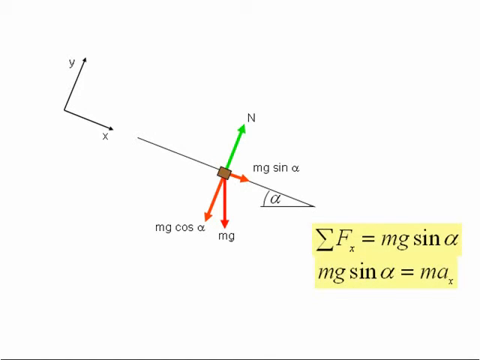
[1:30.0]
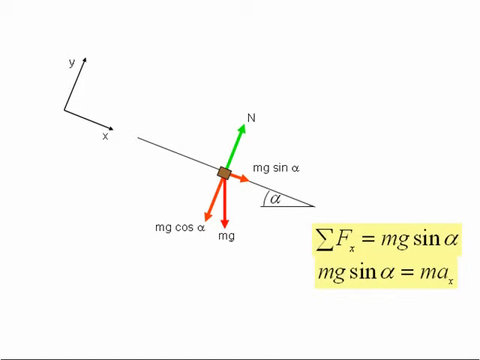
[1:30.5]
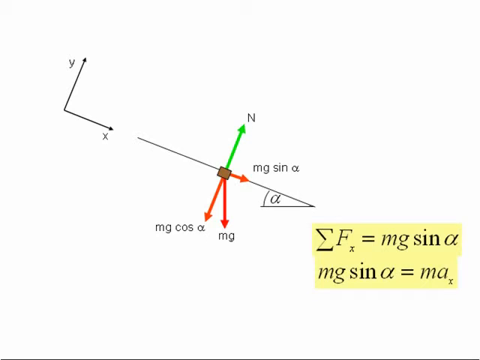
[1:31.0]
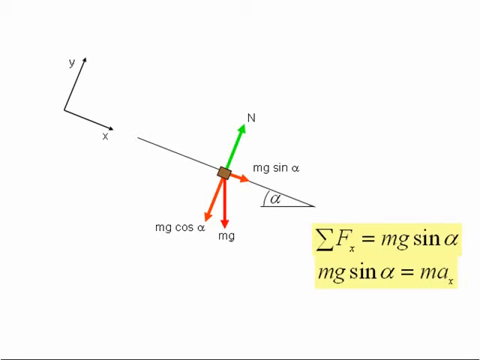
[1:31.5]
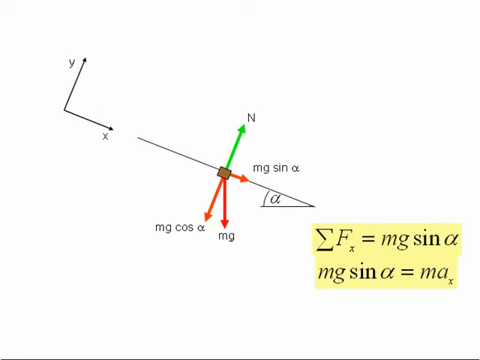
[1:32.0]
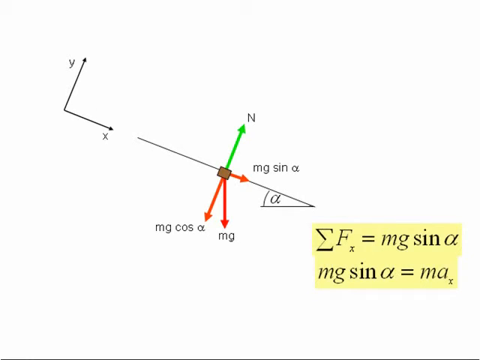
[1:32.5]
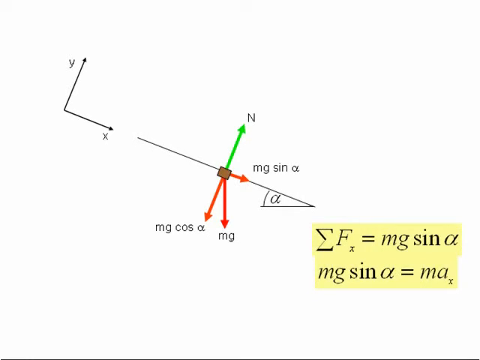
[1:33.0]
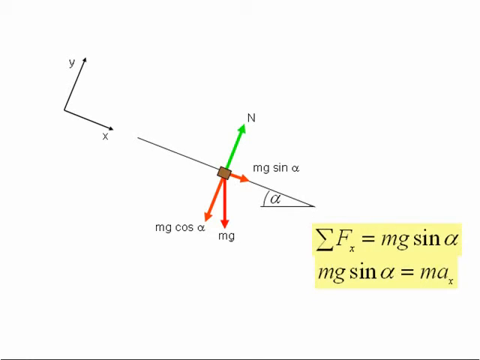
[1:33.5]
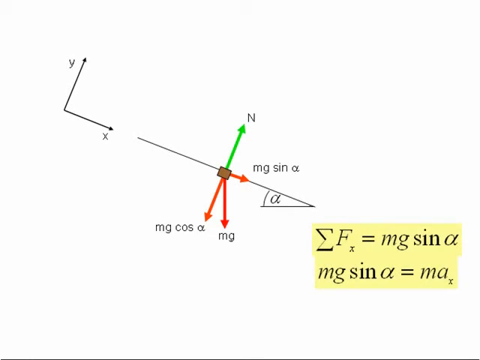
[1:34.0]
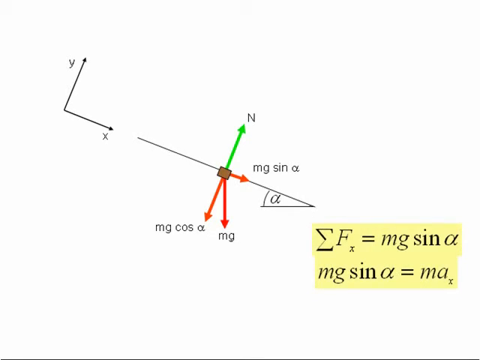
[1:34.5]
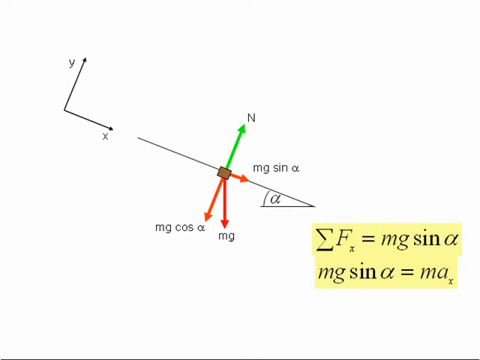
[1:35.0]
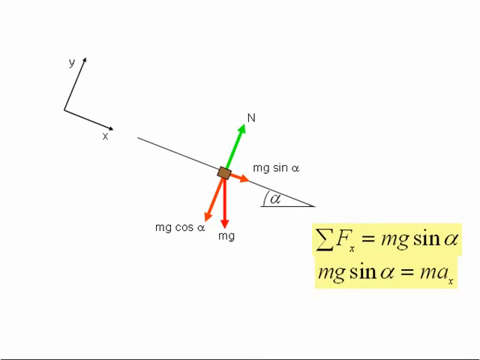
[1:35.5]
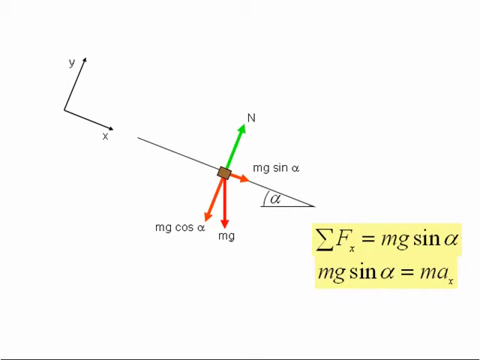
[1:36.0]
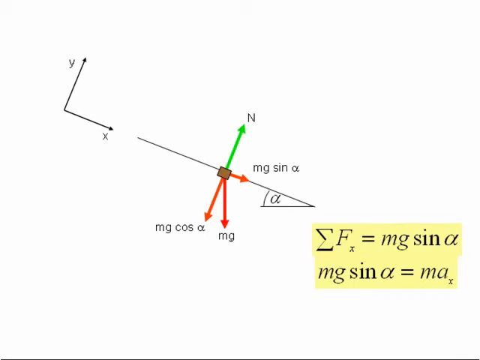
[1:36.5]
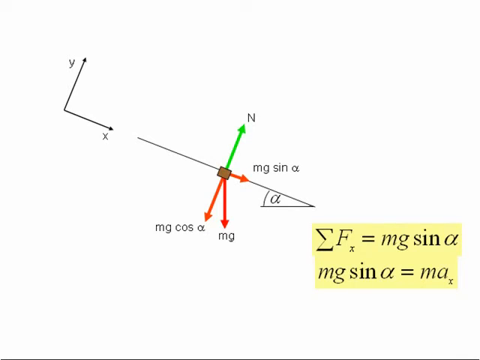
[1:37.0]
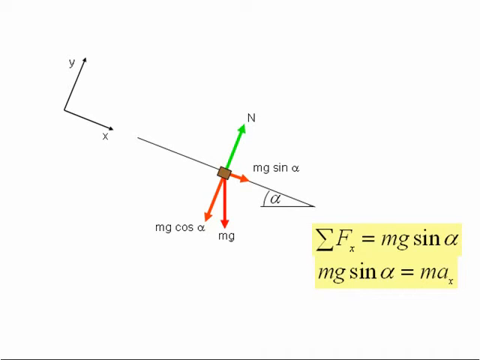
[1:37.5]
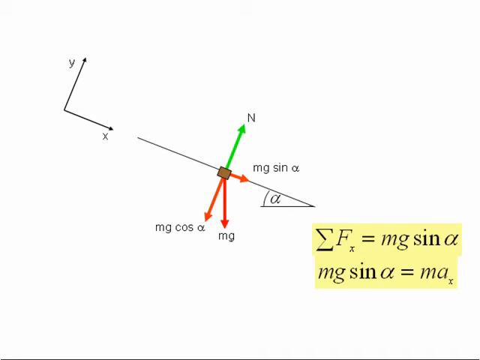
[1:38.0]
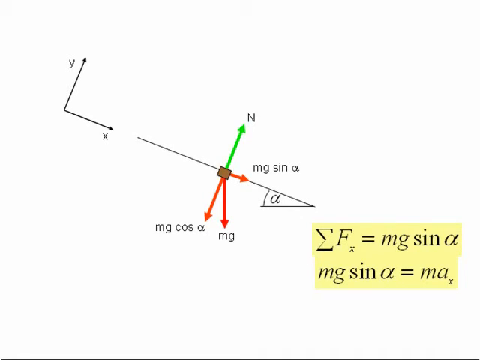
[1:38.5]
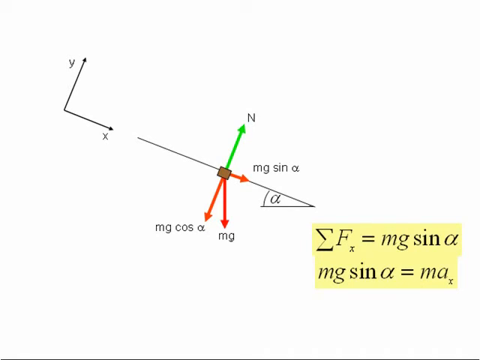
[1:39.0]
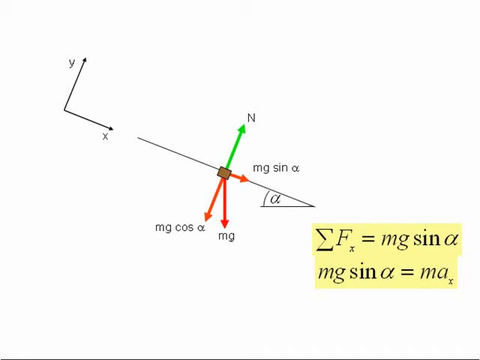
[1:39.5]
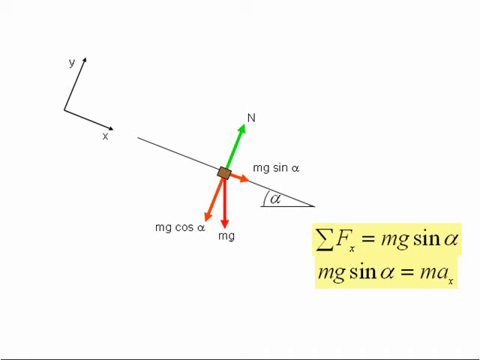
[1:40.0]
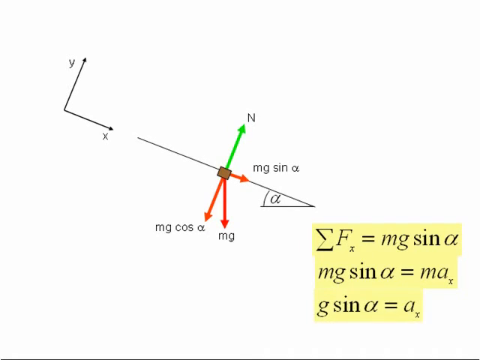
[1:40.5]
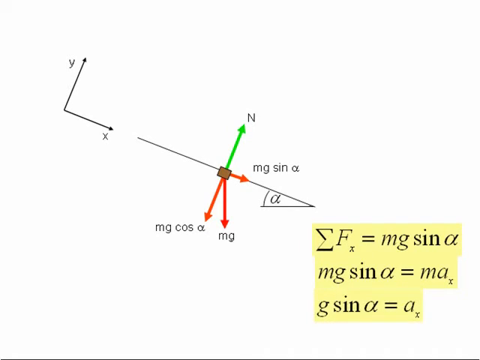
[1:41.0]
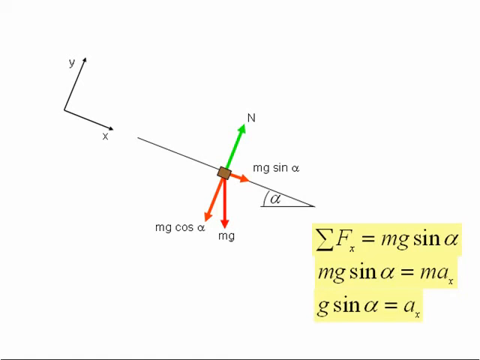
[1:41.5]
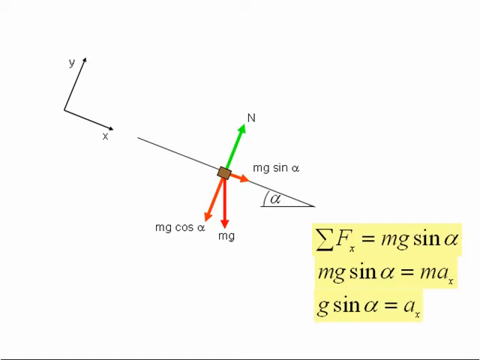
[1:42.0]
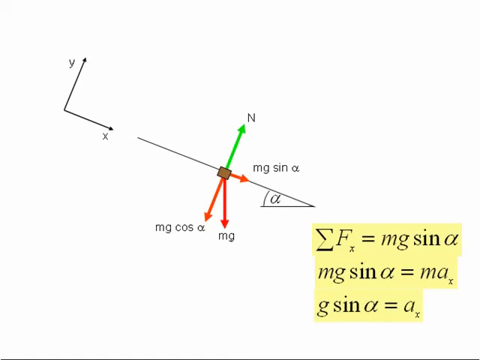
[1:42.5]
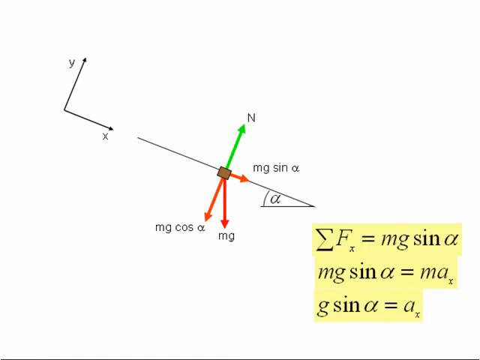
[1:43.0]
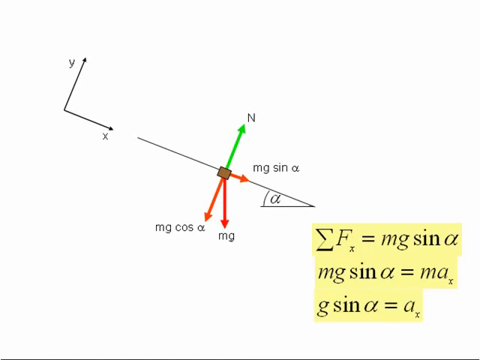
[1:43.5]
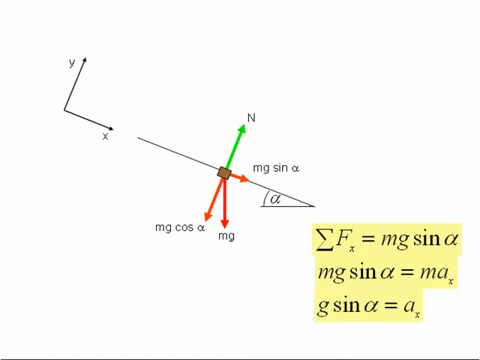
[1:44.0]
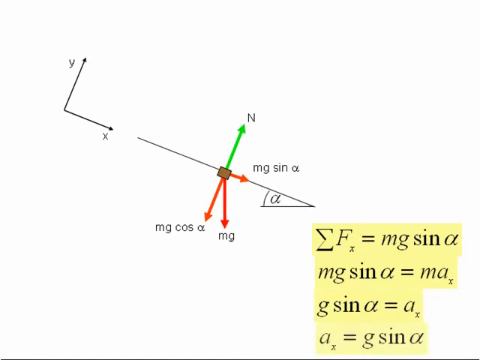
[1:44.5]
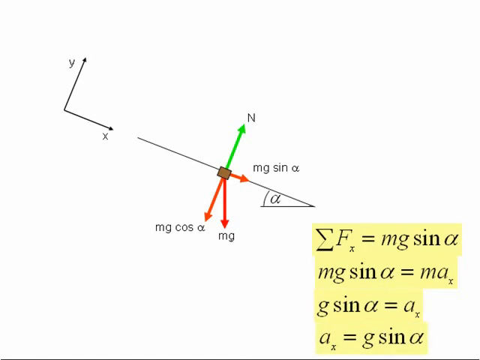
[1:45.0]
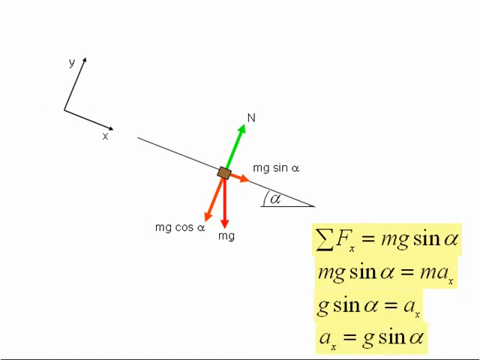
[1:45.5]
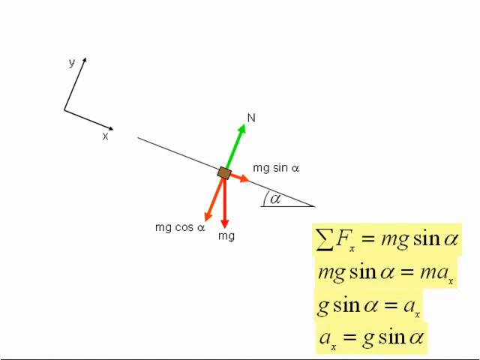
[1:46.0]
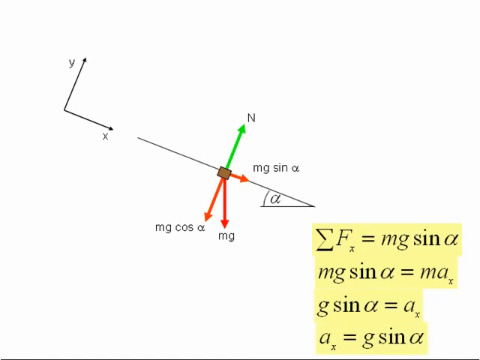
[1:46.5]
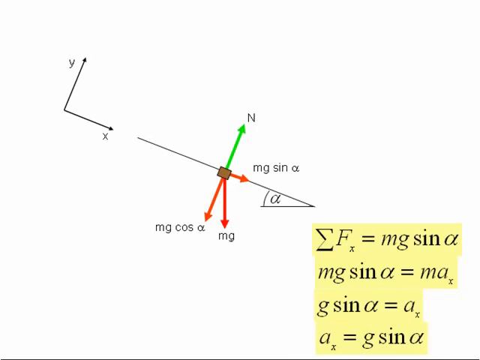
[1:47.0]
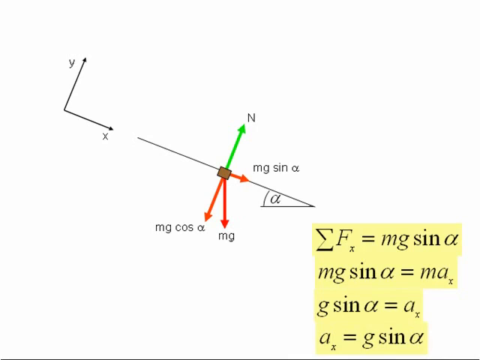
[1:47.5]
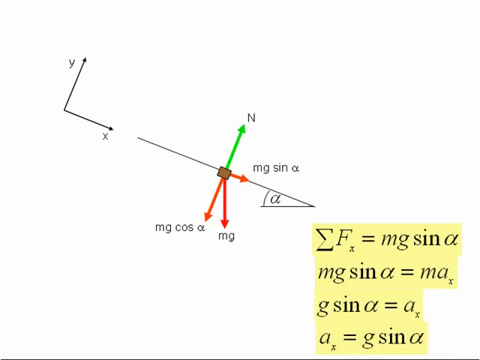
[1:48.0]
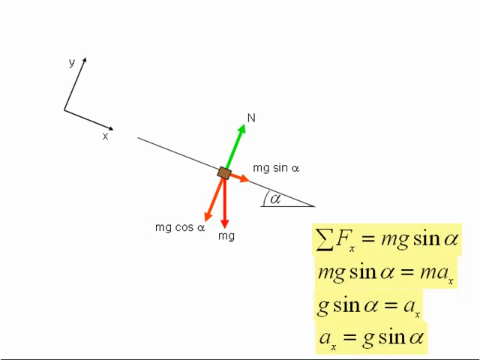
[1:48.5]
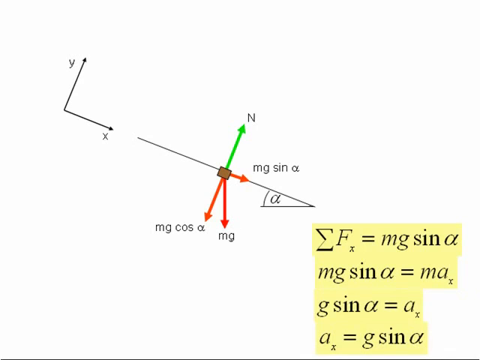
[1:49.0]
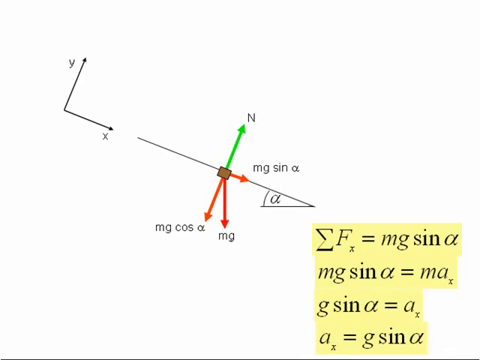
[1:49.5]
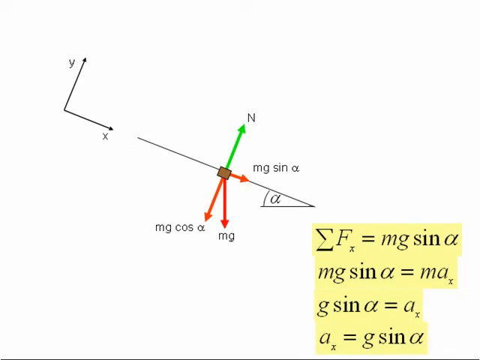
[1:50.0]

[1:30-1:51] The coordinate system with Y and X lines is shown, and on the X line is the main line with the wooden brick in its center. Four lines extend from the brick: a green line called N going north; a short red line, mg cos alpha, going toward the alpha angle; a line called mg going north of the wooden brick; and a last red line, mg cos alpha, going in the minus direction on the Y line. The formulas sum of Fx is equal to mg sin alpha and mg sin alpha is equal to max appear, followed by a new formula, g sin alpha is equal to ax, and then a is equal to g sin alpha, which is the answer to the task.